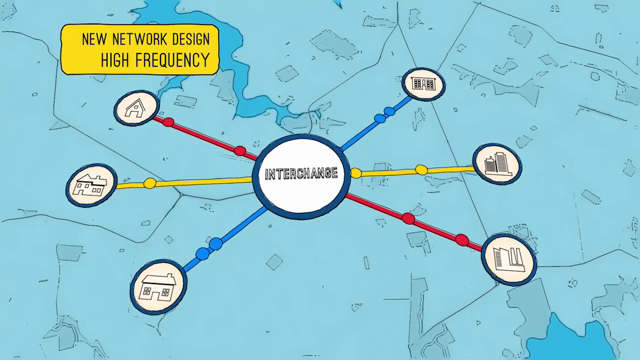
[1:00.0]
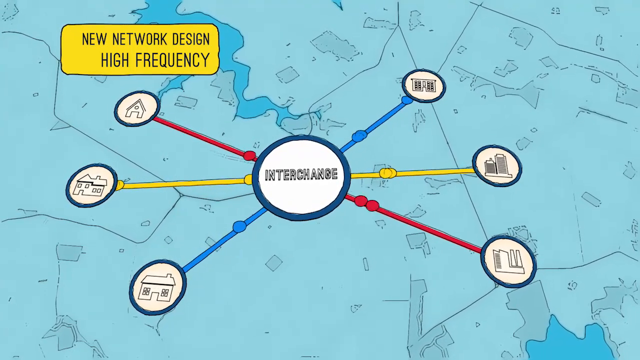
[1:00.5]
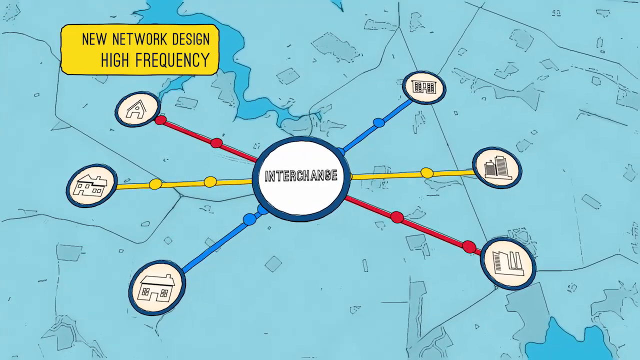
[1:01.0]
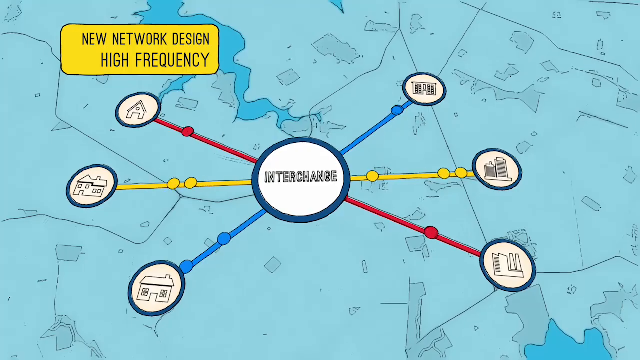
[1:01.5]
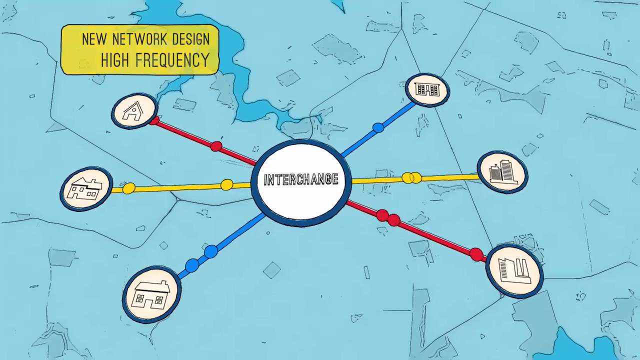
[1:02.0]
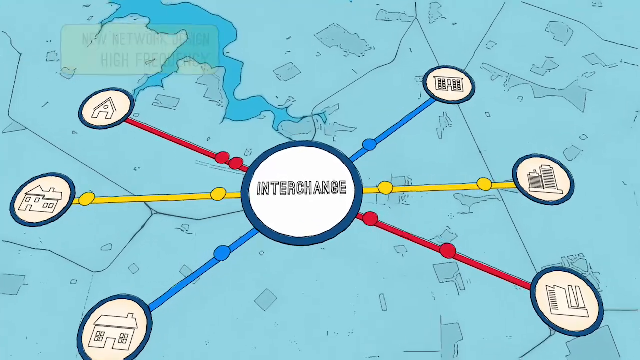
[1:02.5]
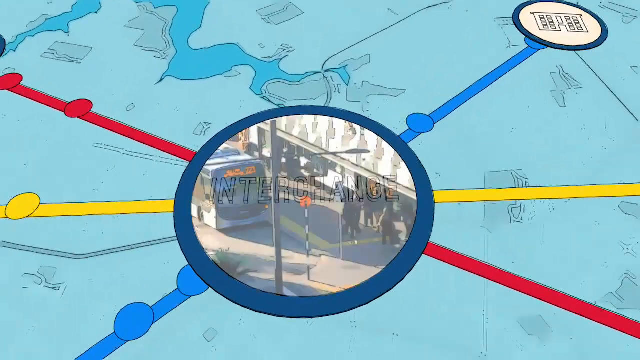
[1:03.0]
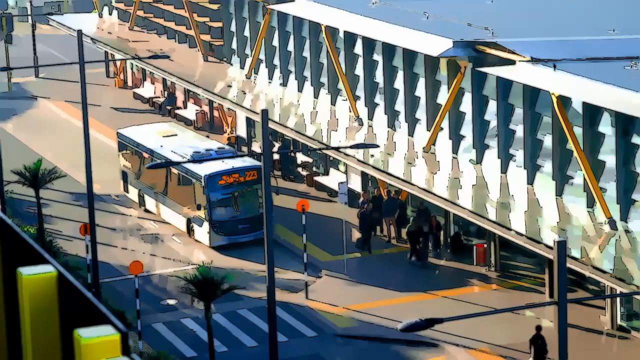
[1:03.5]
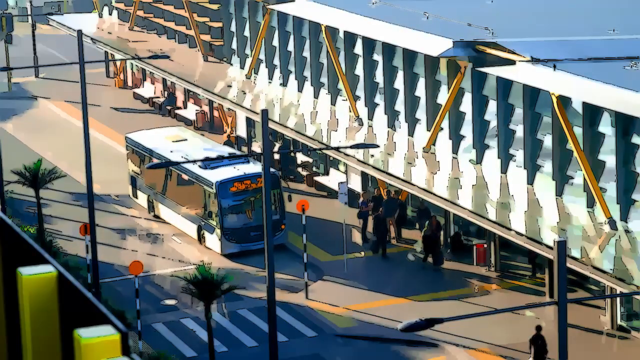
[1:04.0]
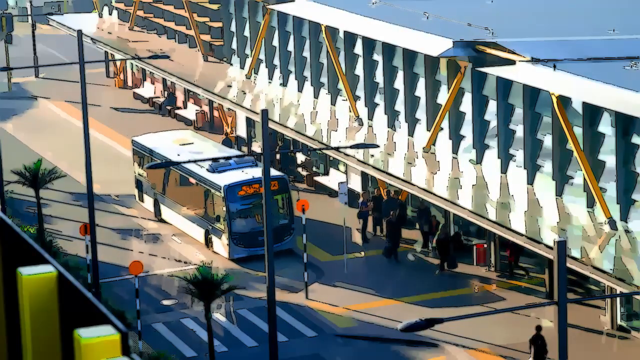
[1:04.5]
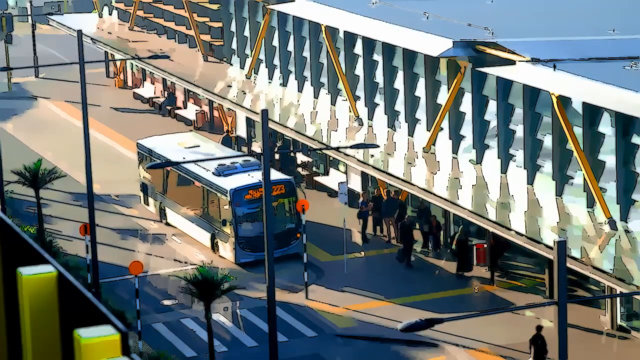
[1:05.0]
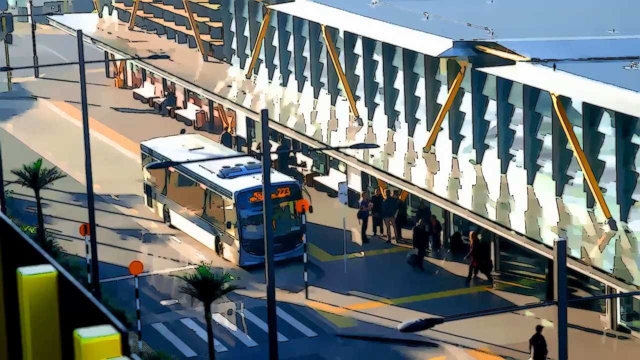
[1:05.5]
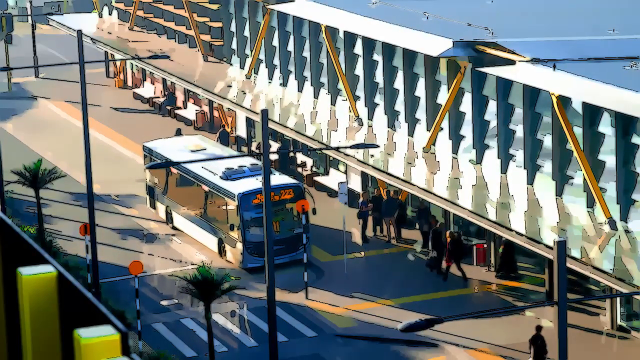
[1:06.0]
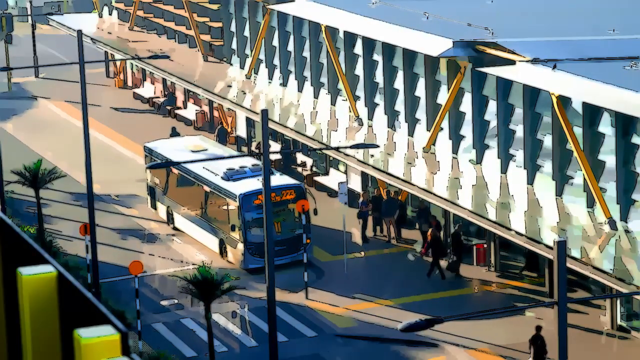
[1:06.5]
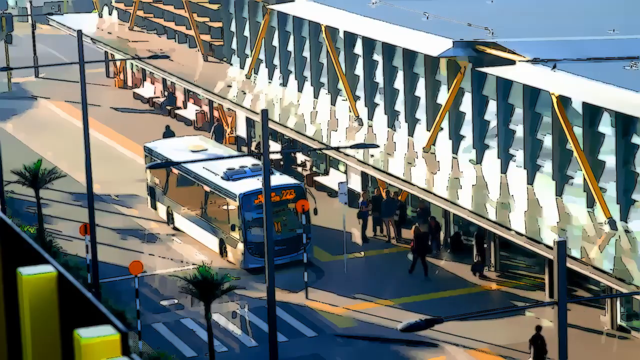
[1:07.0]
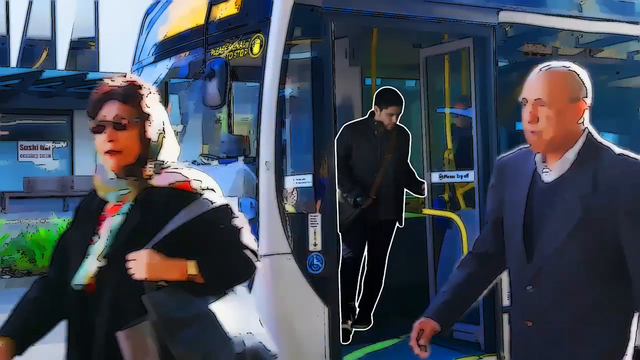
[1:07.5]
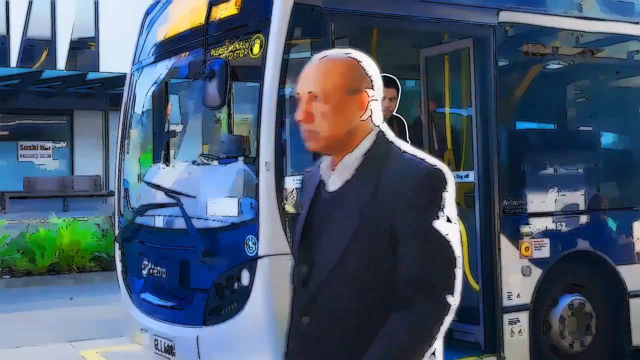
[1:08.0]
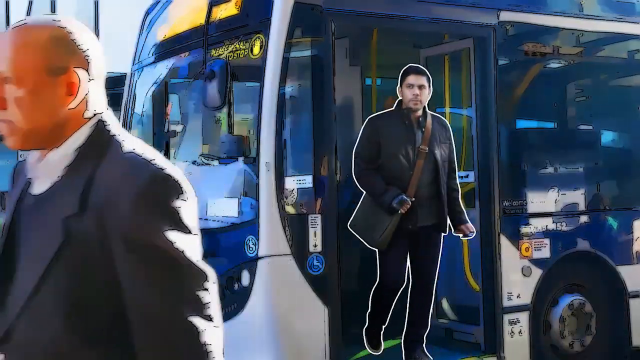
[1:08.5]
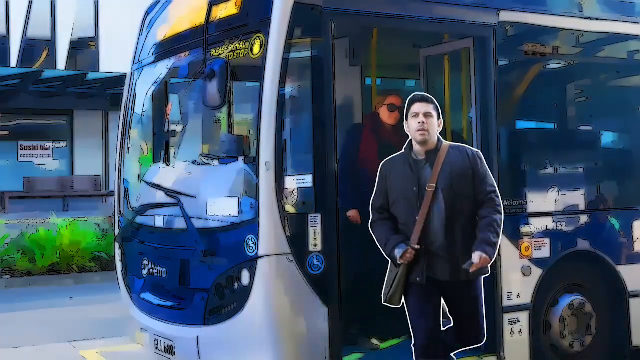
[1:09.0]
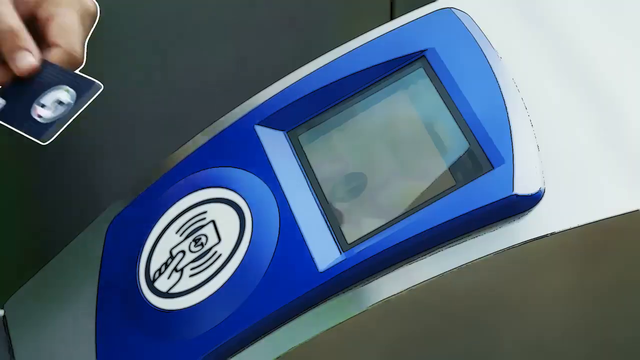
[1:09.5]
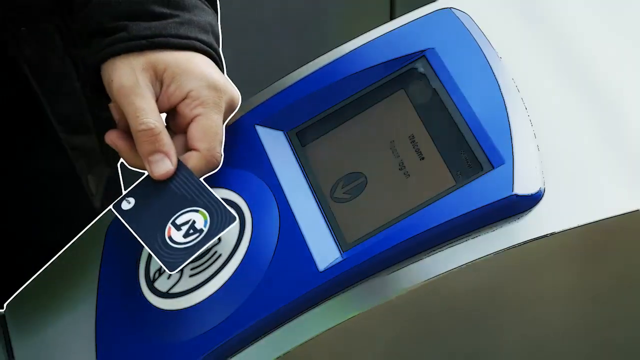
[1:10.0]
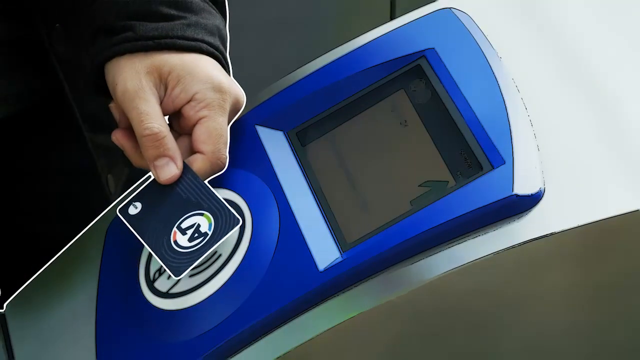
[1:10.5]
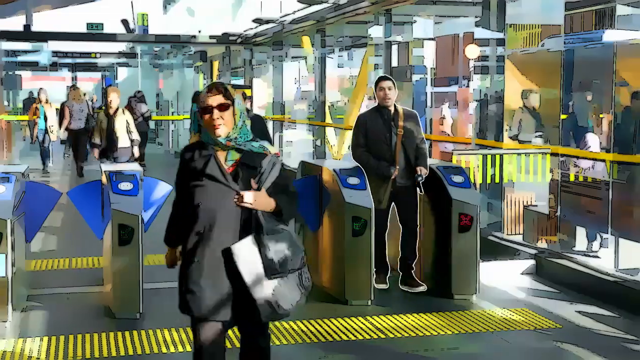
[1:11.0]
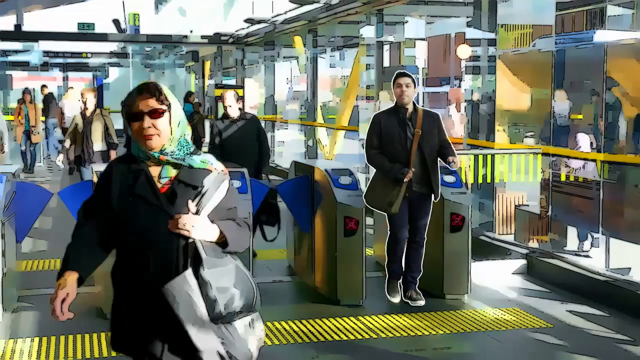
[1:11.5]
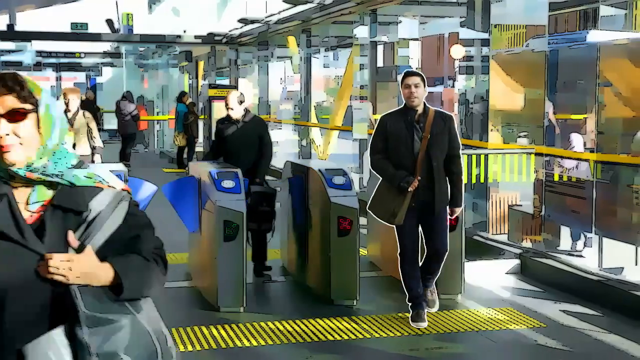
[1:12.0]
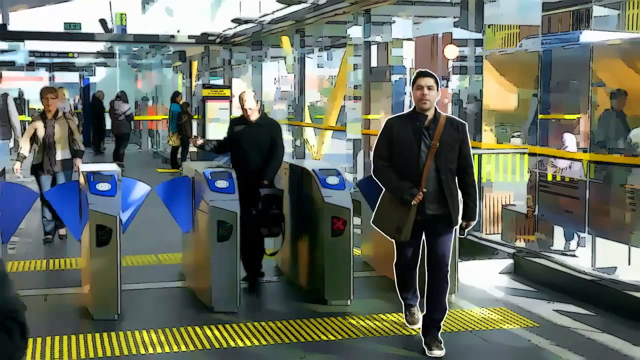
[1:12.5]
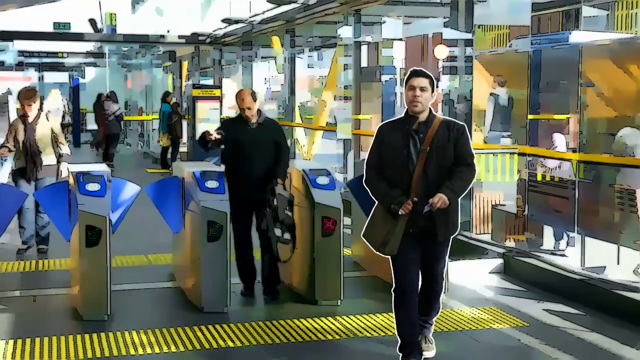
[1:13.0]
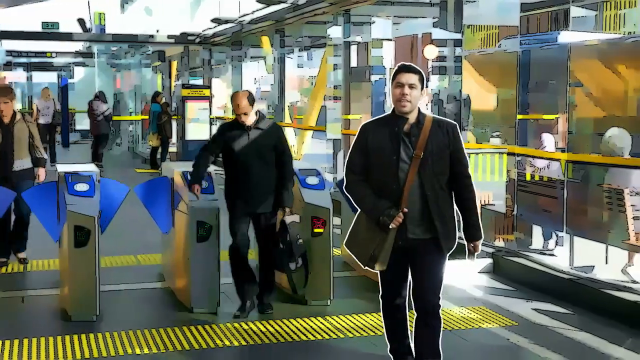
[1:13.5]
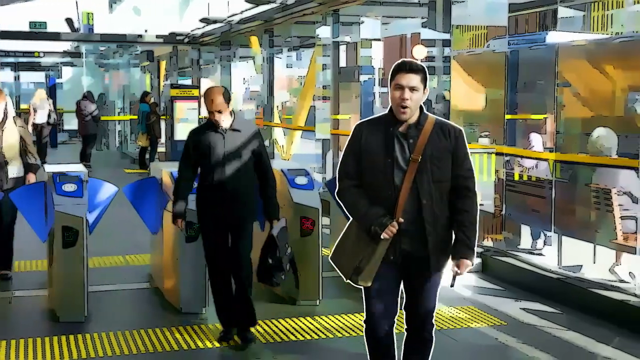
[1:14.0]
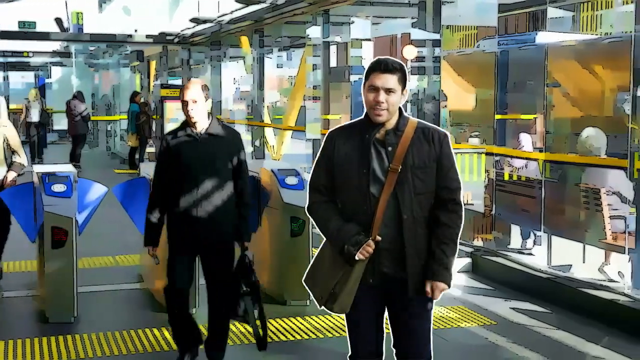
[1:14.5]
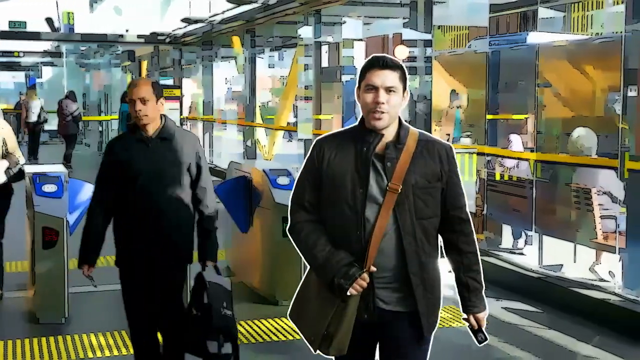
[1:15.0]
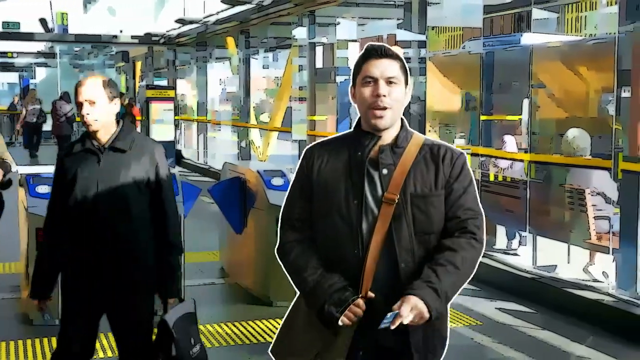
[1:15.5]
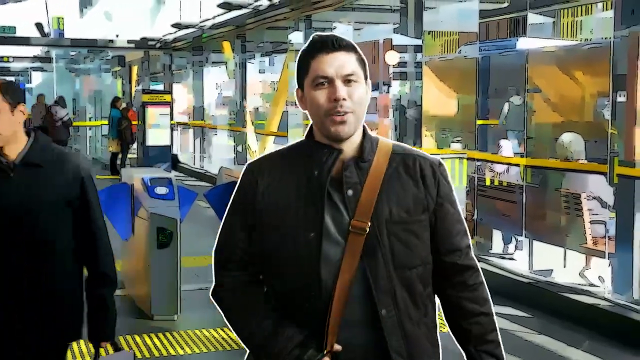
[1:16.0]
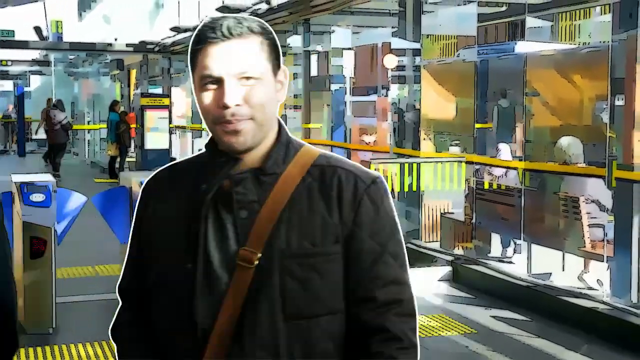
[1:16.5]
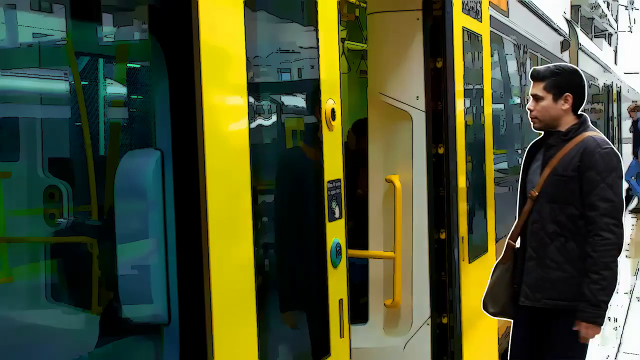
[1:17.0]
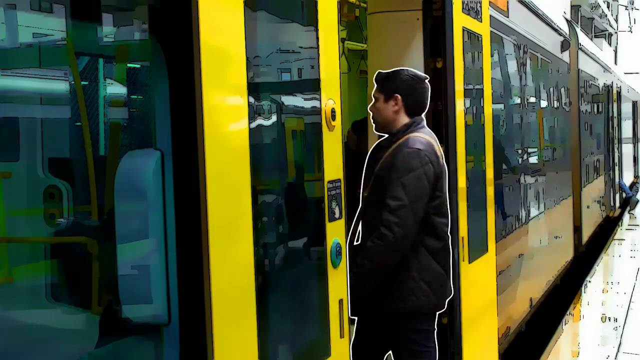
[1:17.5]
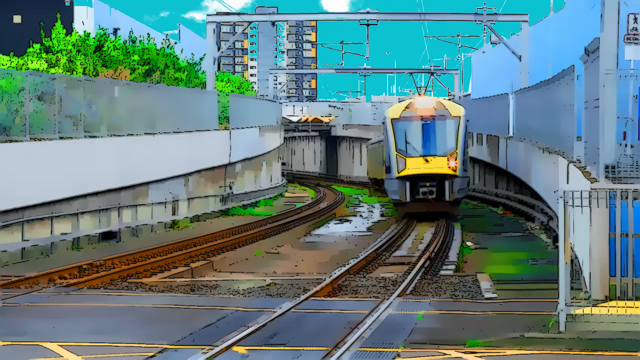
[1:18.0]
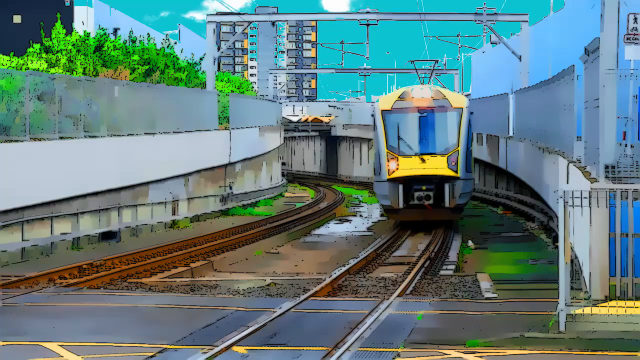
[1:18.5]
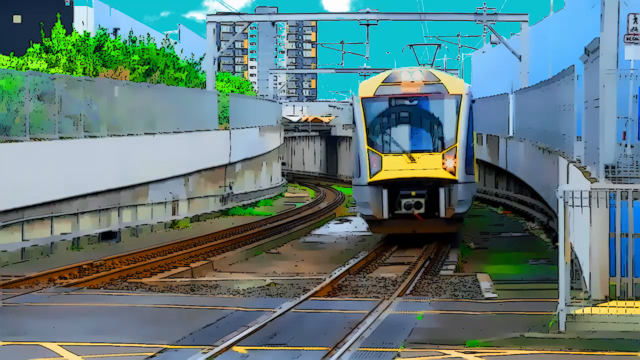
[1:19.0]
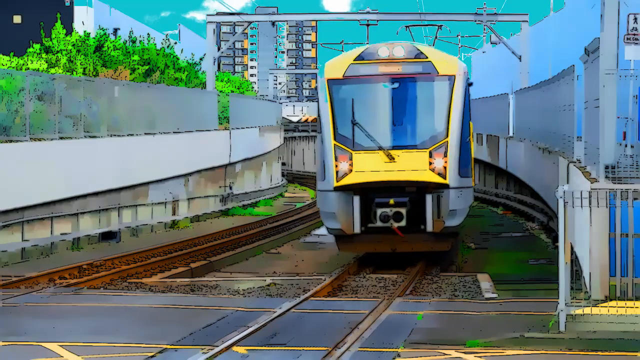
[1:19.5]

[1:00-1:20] The new network design for high frequency shows yellow, red and blue lines, with small circles going backwards and forwards between the outer circles. The camera moves closer to the interchange circle, and a video appears of a bus pulling into a station, with a zebra crossing and people moving around and standing in the station concourse. The bus comes to a stop, the doors open, and the man in the white highlighted outline gets off. He puts his AT card on the AT reader to scan it and goes into the station through a ticket barrier, putting the card through and picking it up on the other side. He continues walking towards the camera and begins speaking to it. Other people go through the turnstile ticket machines. The man smiles and gets onto a train, and the train exits the station on the line away from the city.